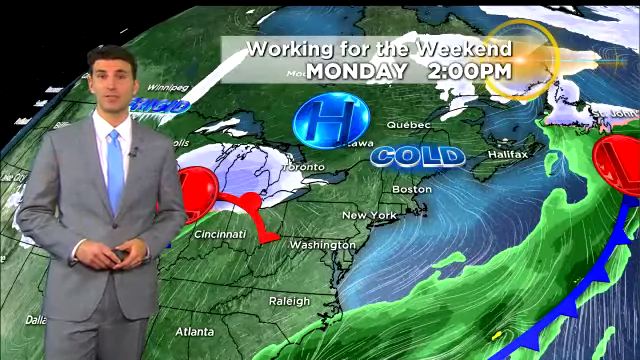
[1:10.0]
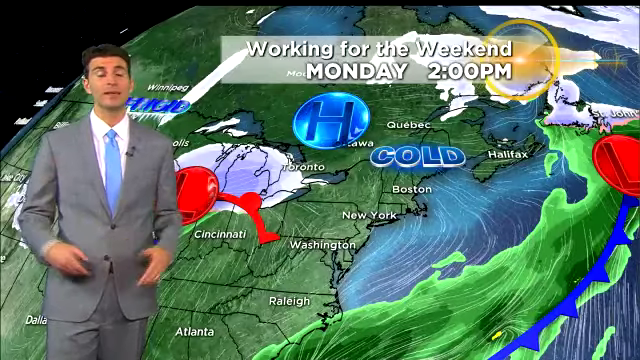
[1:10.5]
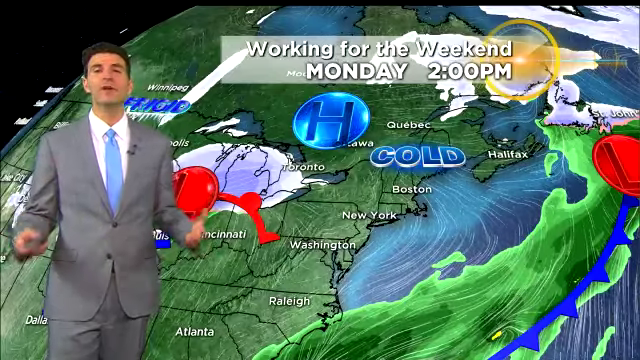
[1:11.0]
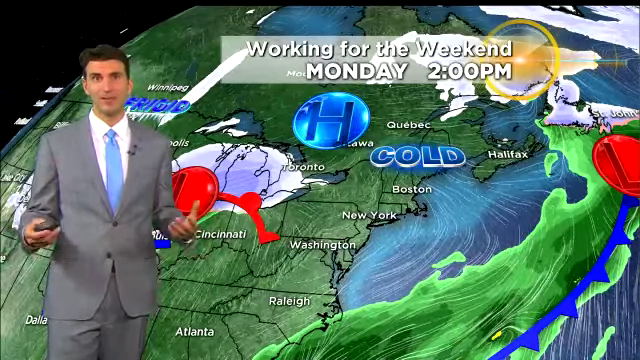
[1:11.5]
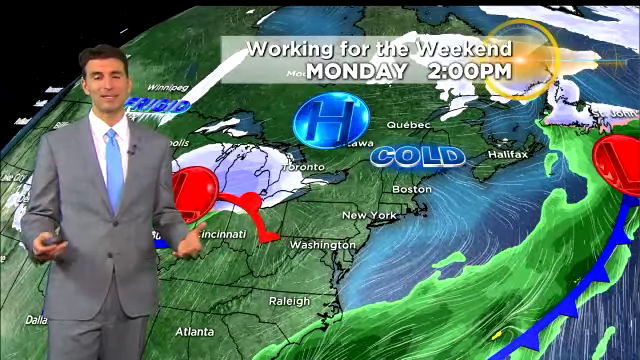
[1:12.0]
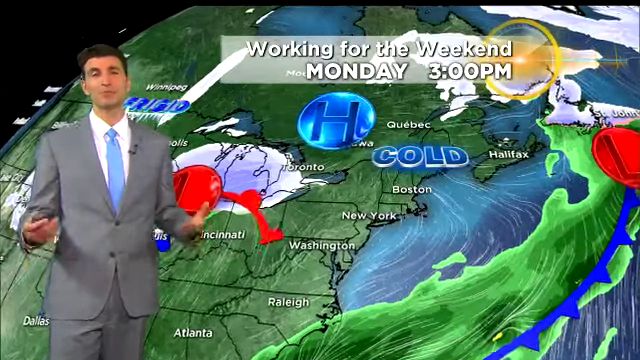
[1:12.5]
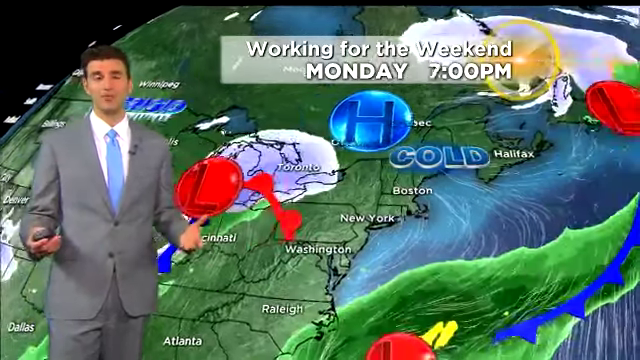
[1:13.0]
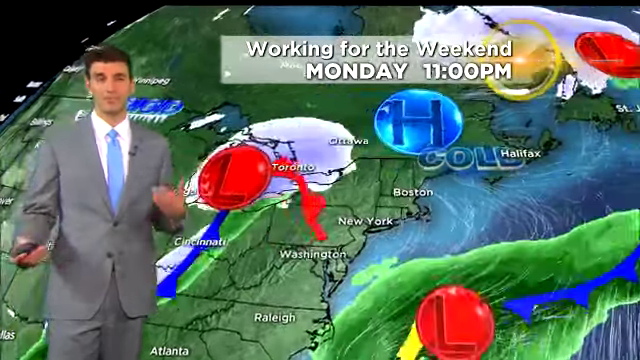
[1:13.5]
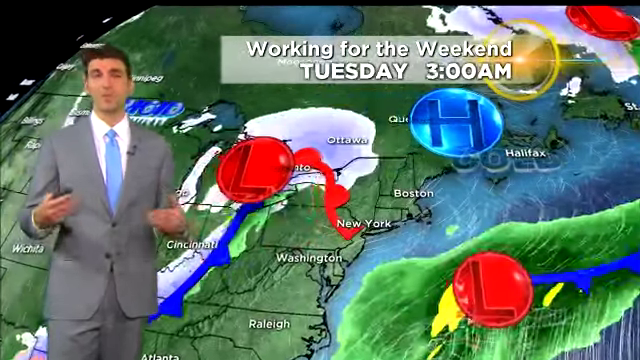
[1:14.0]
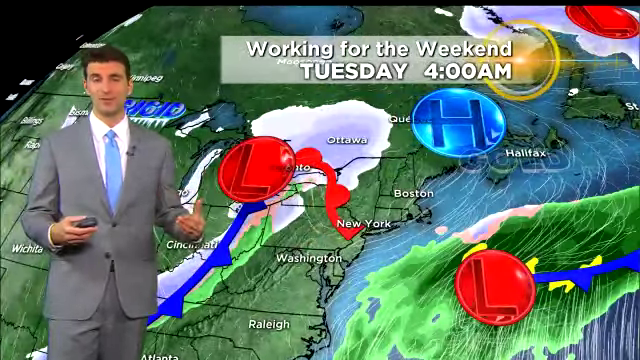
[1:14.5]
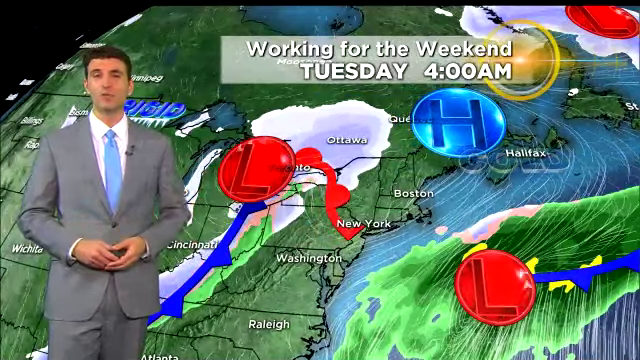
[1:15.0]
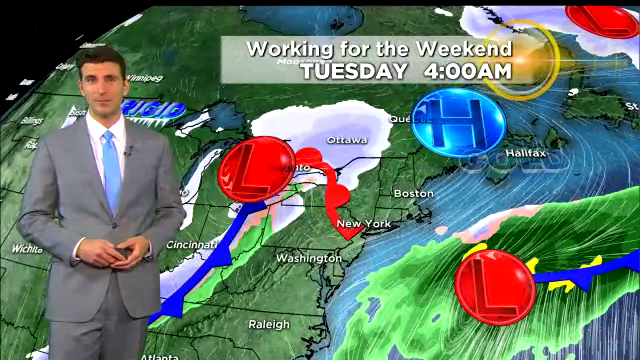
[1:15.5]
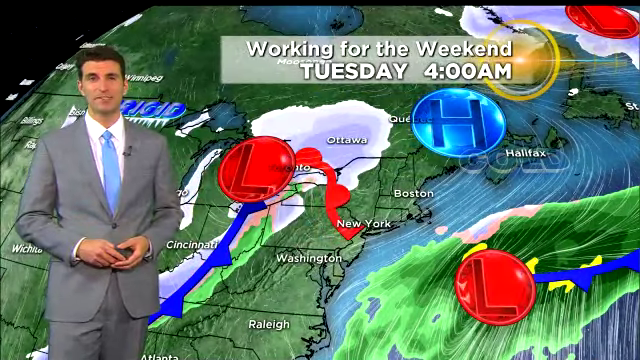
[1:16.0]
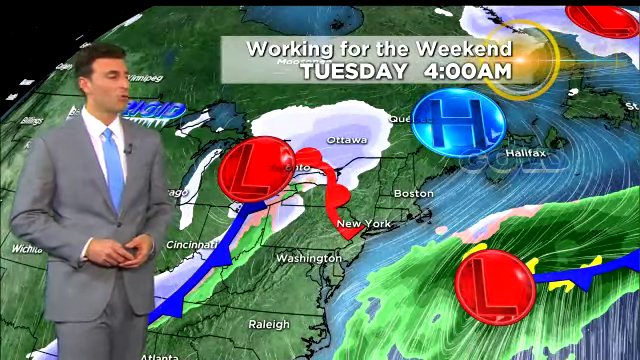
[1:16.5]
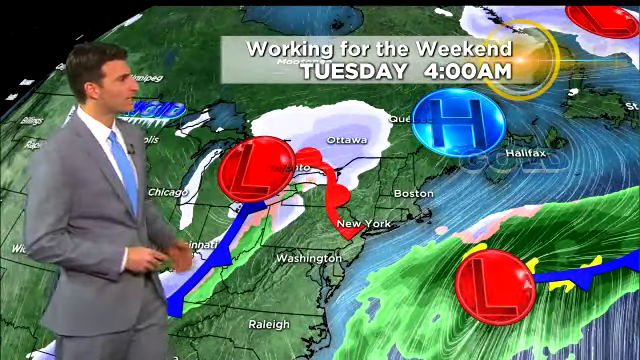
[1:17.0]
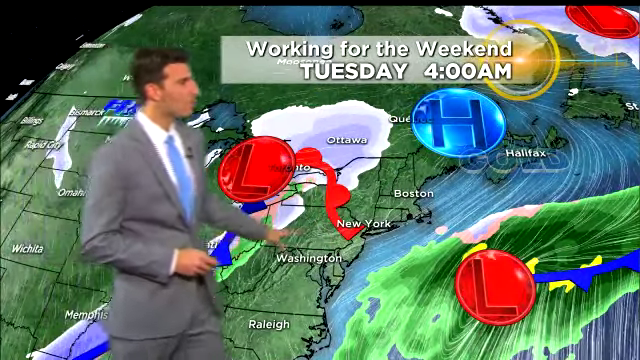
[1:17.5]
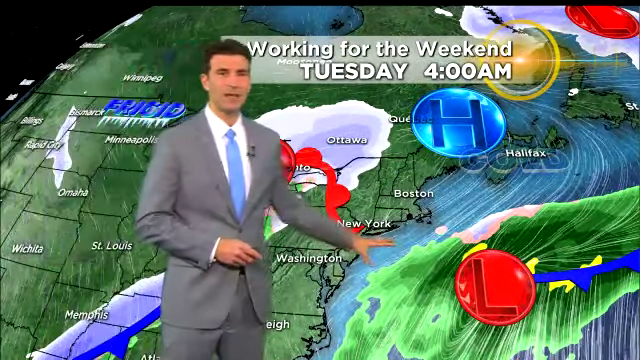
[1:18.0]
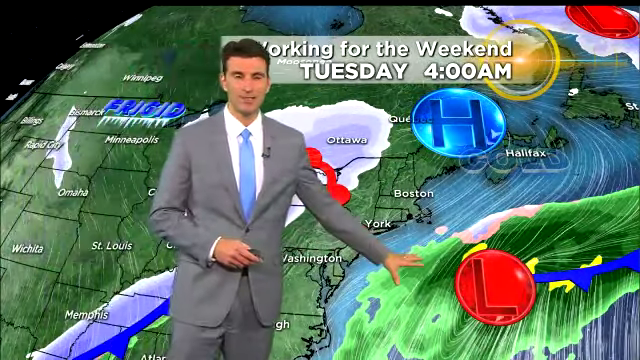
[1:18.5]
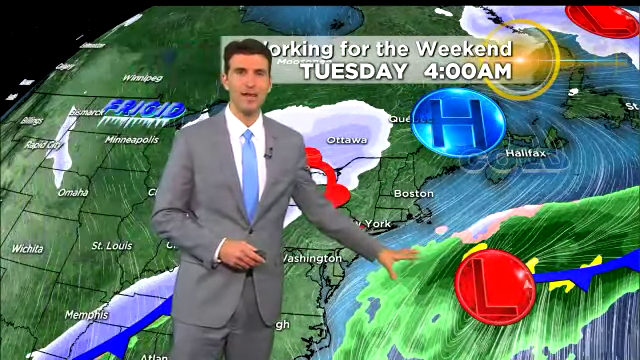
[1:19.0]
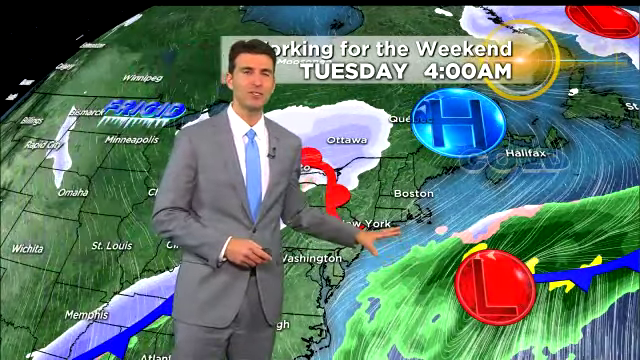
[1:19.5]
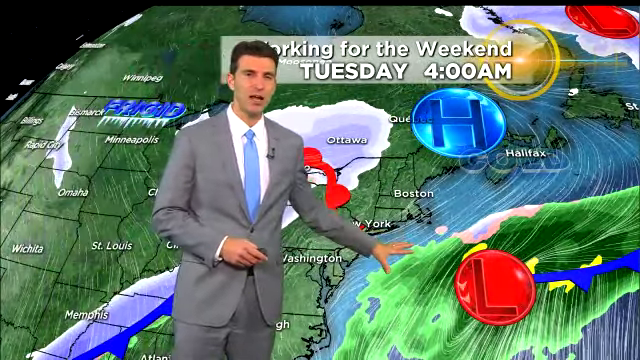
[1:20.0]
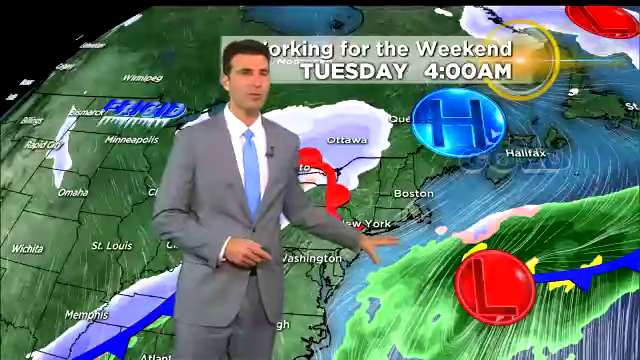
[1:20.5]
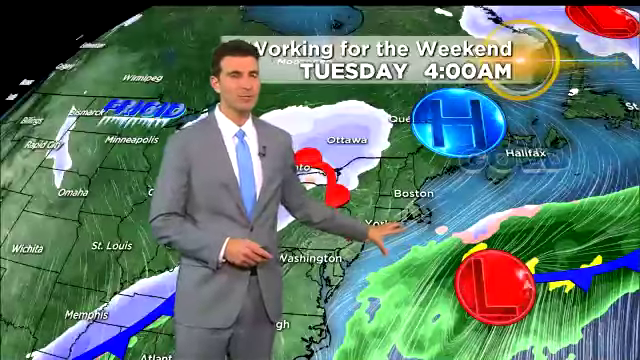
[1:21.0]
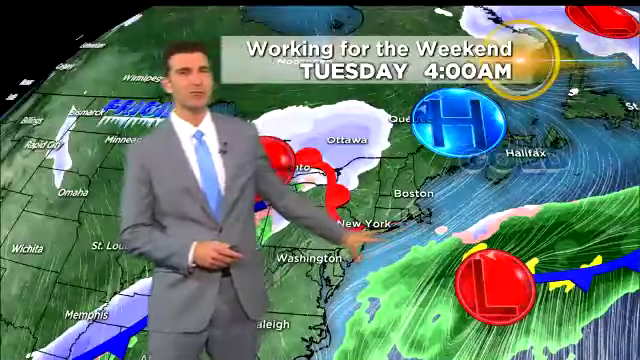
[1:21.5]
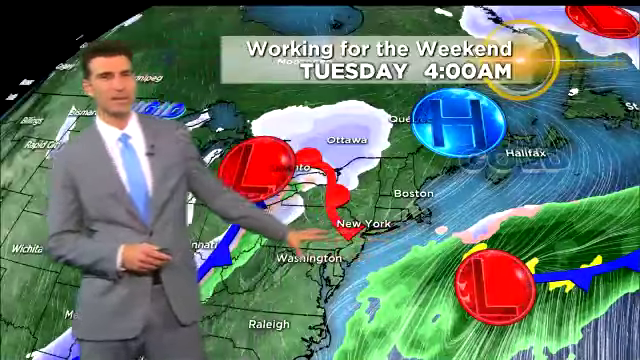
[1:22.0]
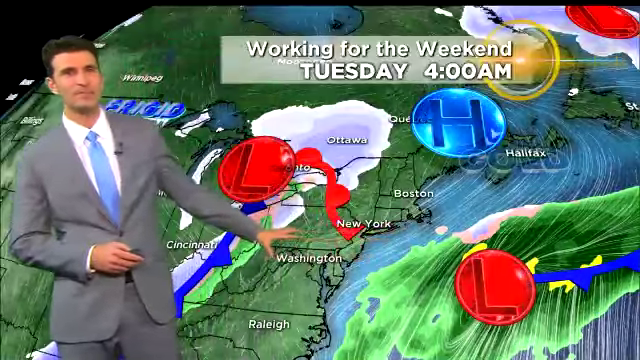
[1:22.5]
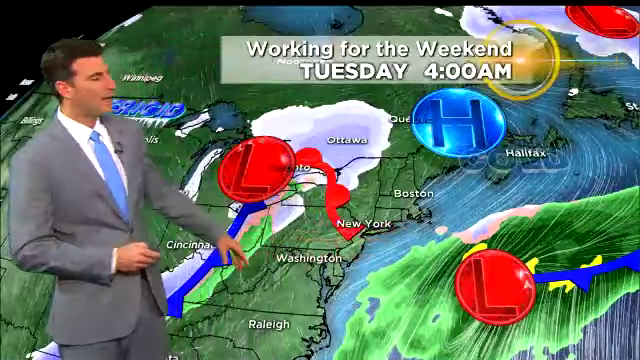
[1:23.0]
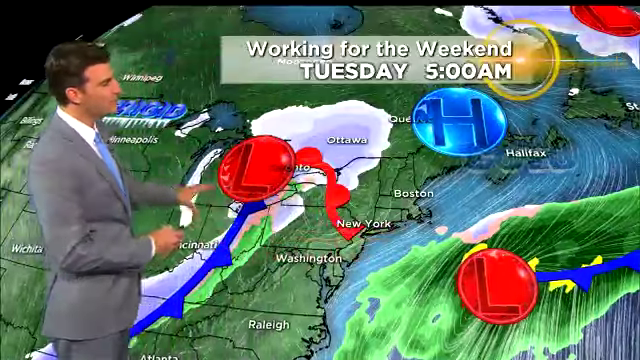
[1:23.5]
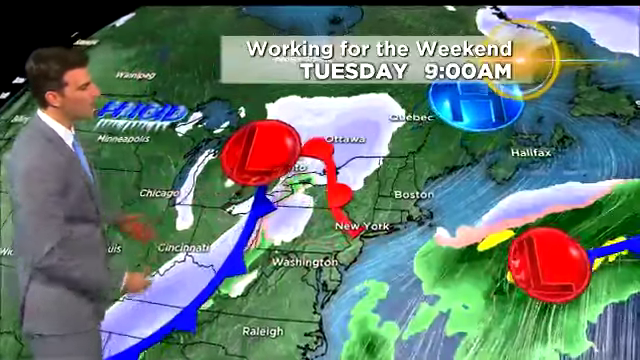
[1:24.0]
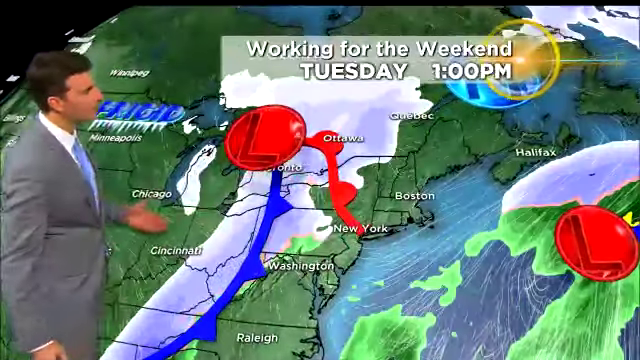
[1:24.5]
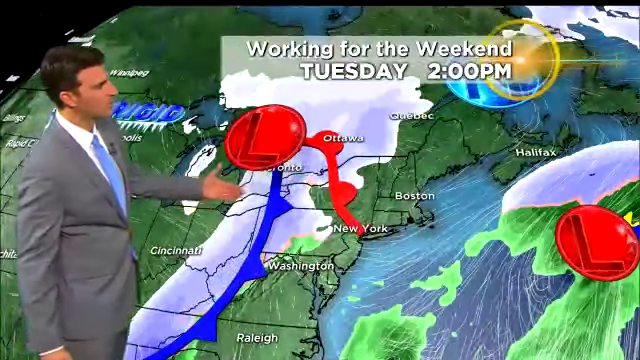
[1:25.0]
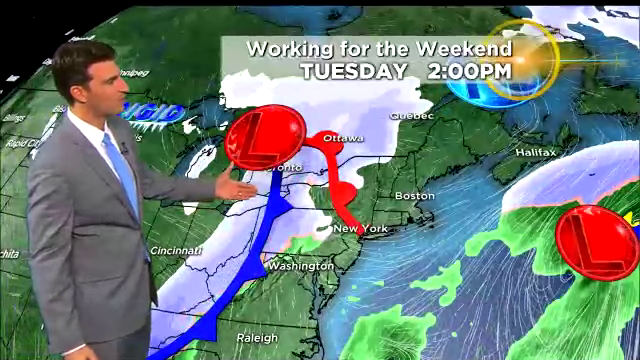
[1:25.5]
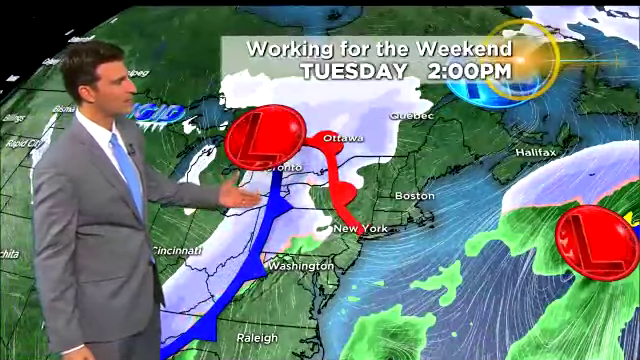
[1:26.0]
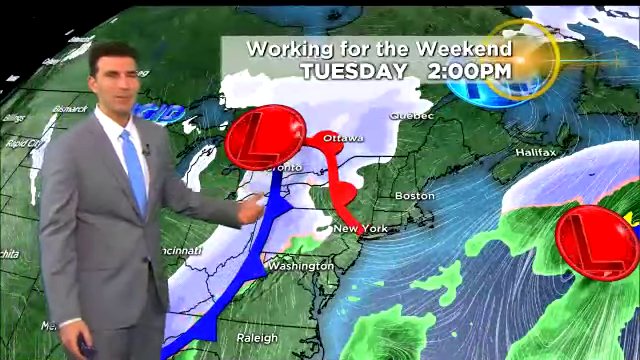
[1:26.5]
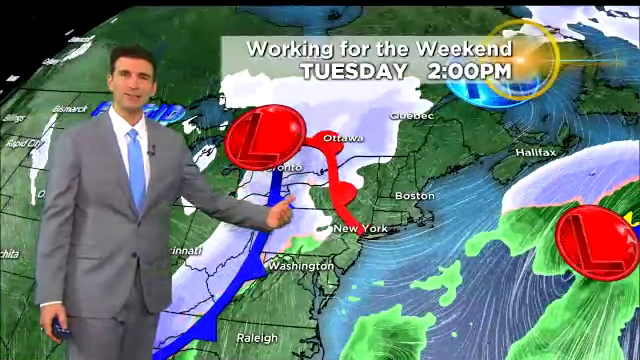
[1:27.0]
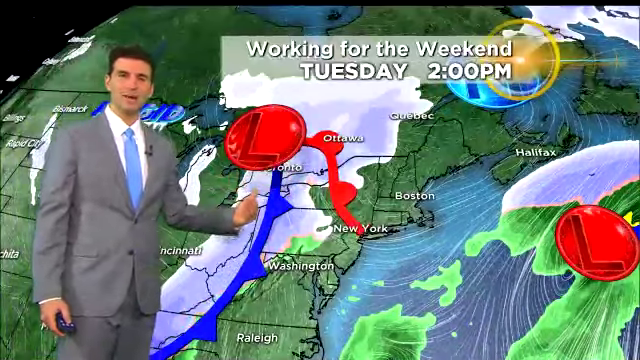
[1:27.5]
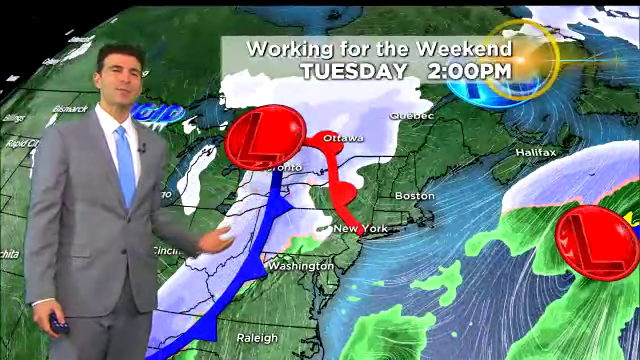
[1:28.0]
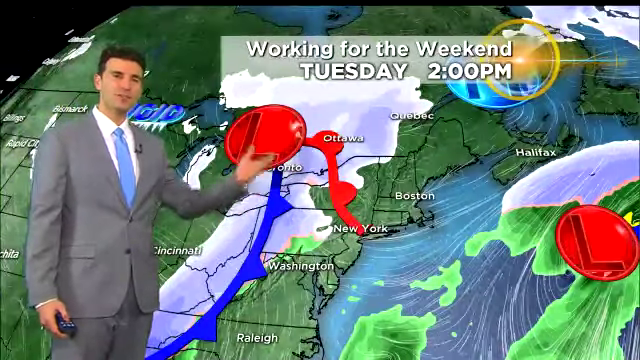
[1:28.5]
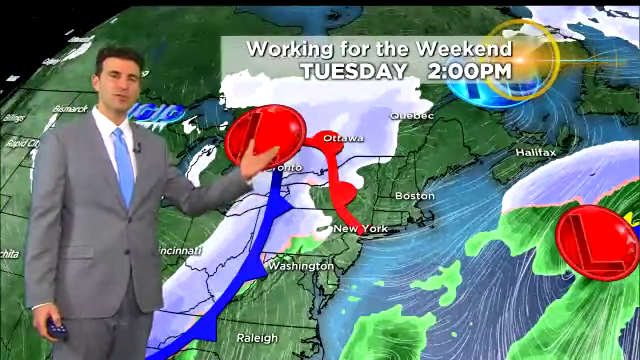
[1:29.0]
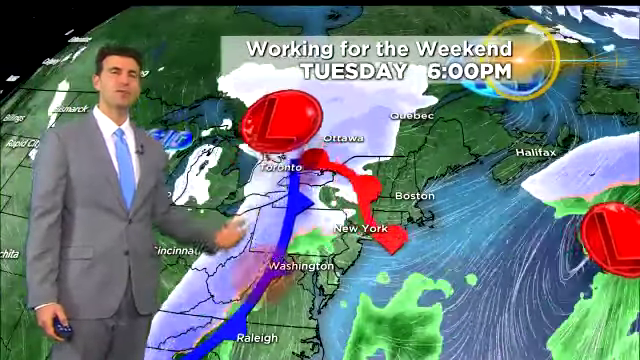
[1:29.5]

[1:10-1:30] A graphic reads "working for the weekend" and shows Tuesday at 2 p.m., when it is cold. The places shown are Washington, New York, Boston, Halifax, Quebec, Ottawa, Toronto and Cincinnati. H marks indicate high pressure and L marks indicate low. Days and times are shown together for each forecast.